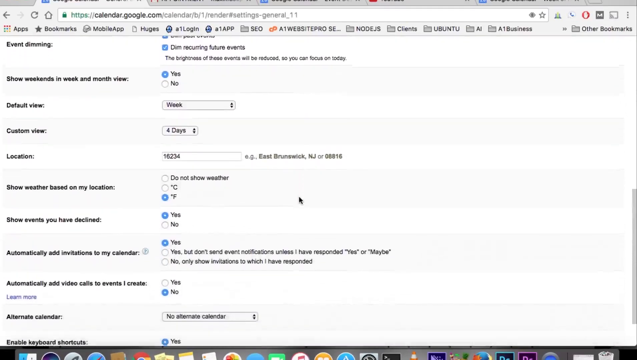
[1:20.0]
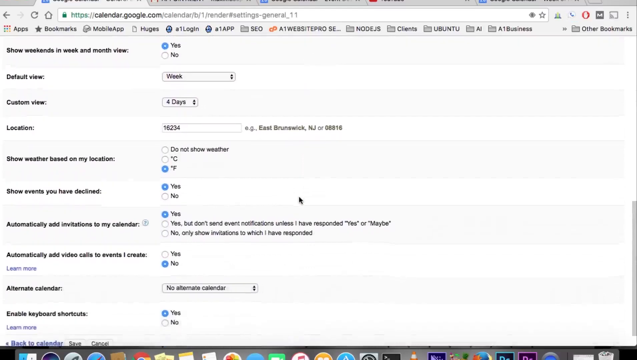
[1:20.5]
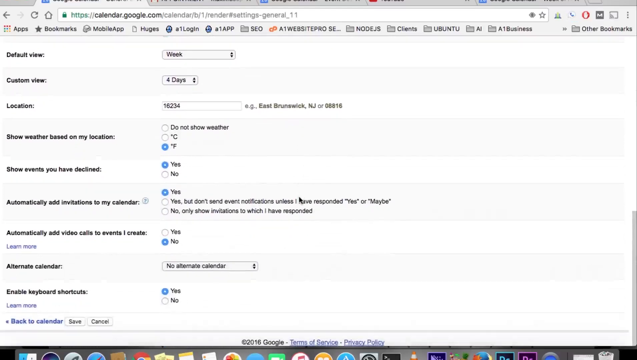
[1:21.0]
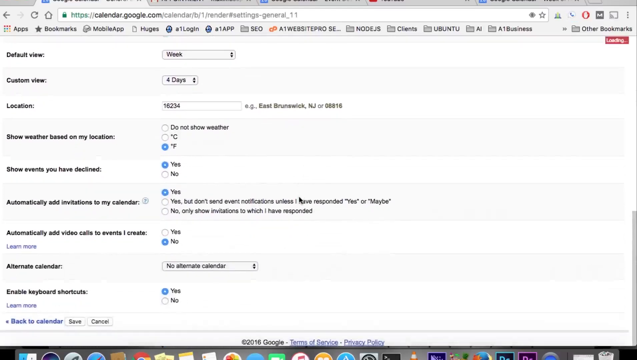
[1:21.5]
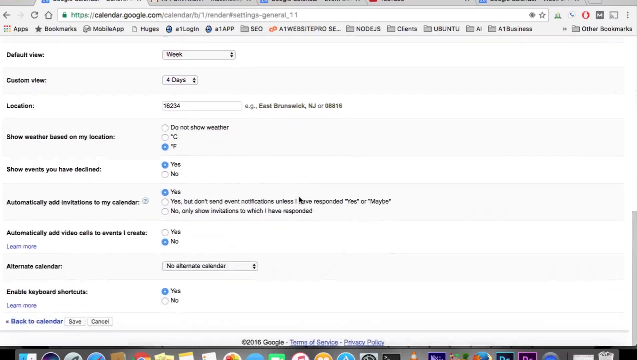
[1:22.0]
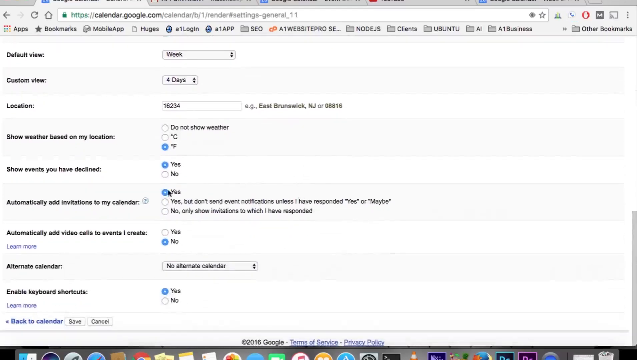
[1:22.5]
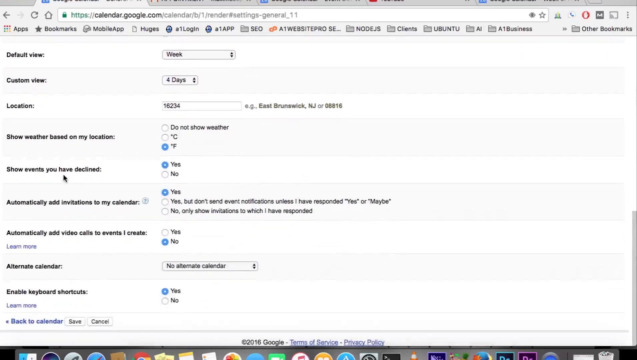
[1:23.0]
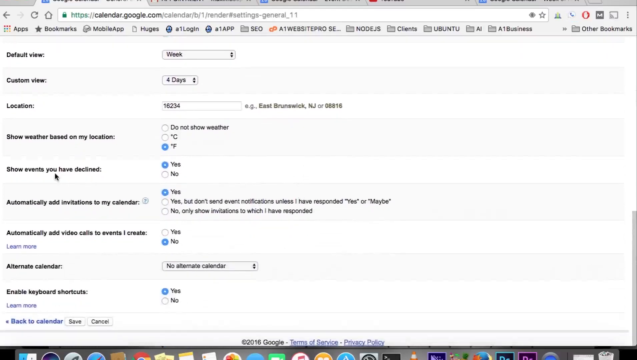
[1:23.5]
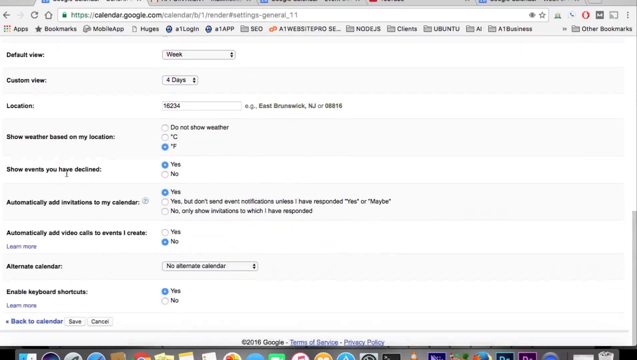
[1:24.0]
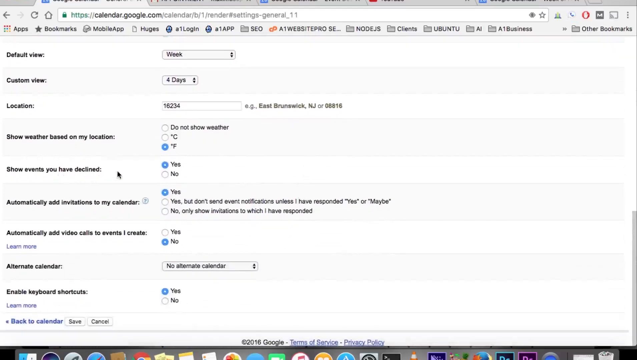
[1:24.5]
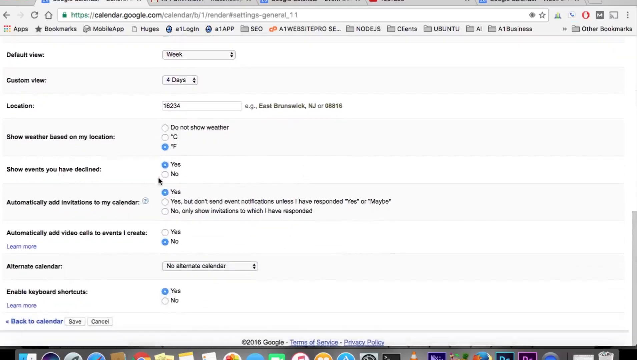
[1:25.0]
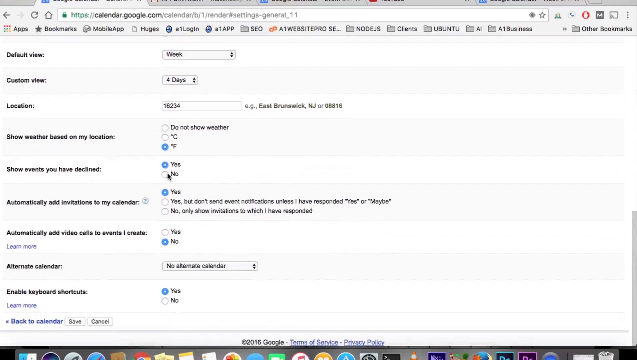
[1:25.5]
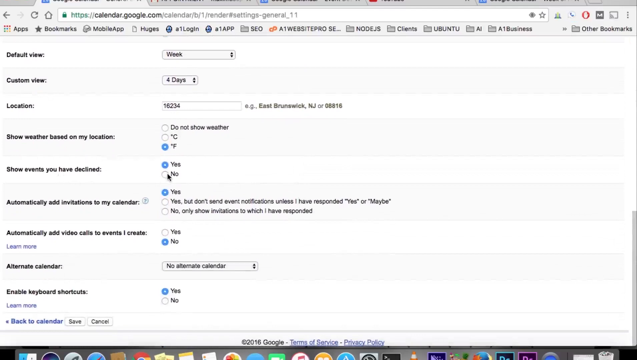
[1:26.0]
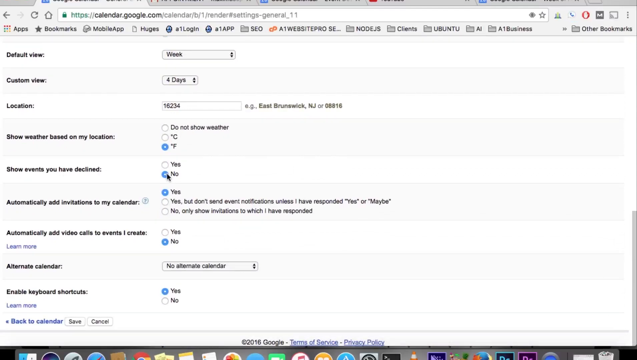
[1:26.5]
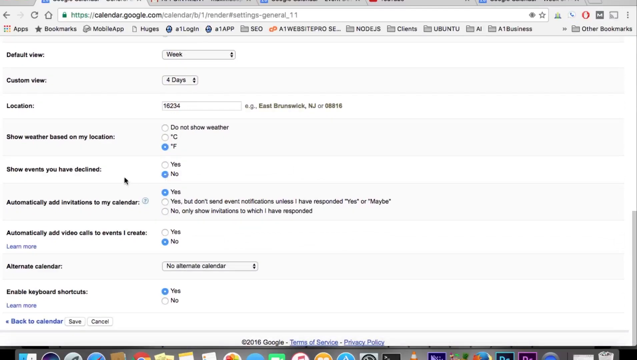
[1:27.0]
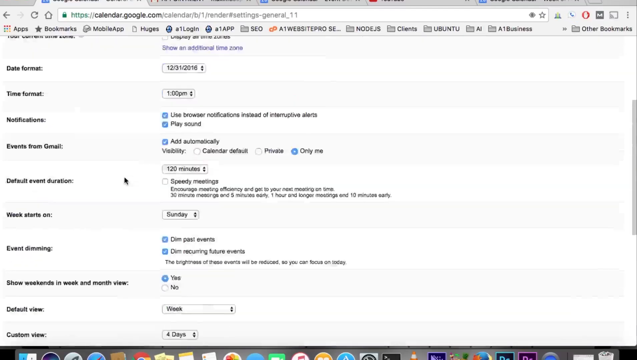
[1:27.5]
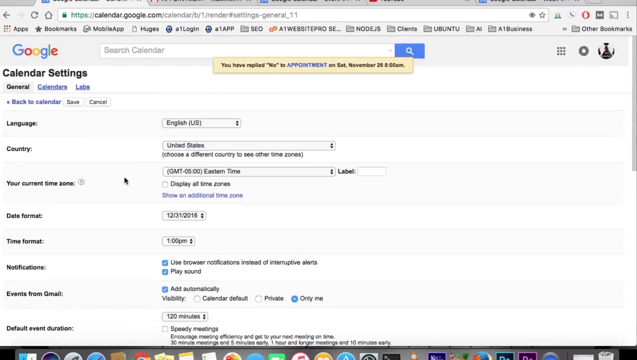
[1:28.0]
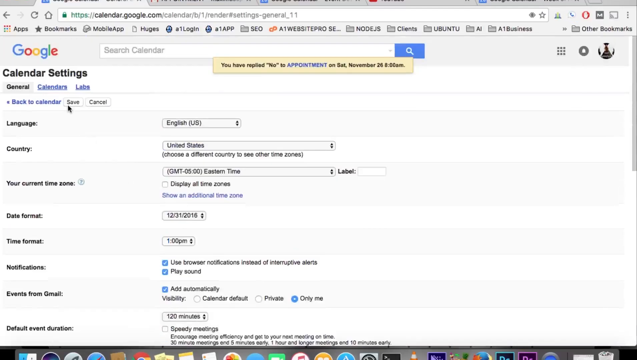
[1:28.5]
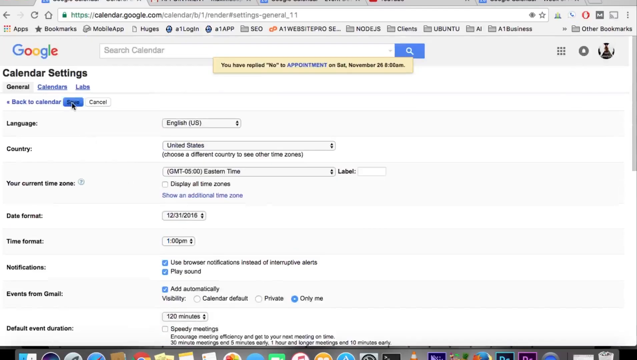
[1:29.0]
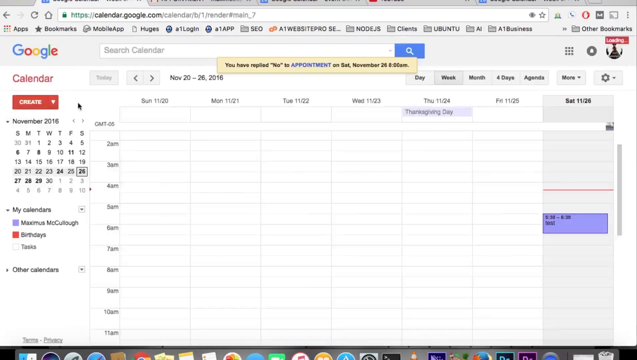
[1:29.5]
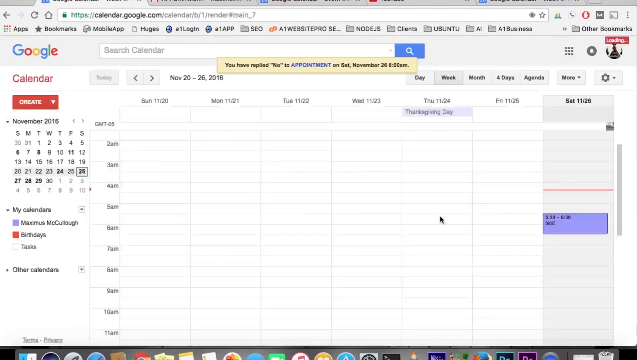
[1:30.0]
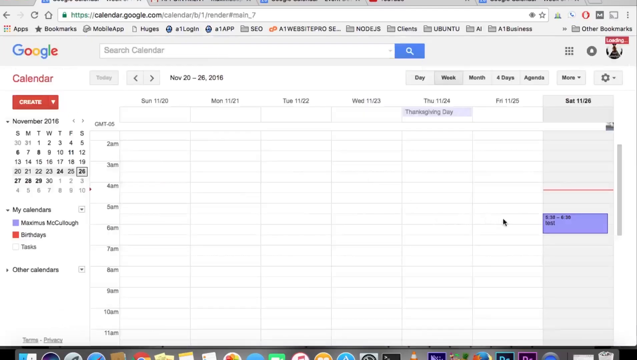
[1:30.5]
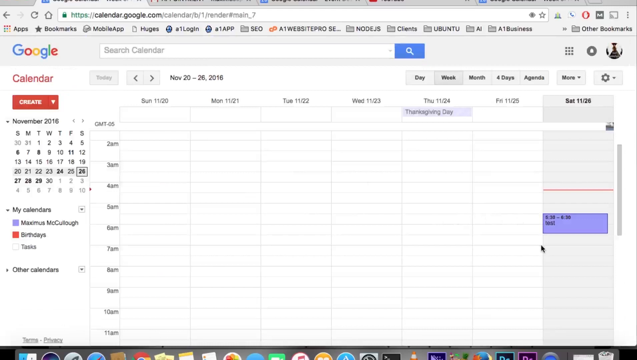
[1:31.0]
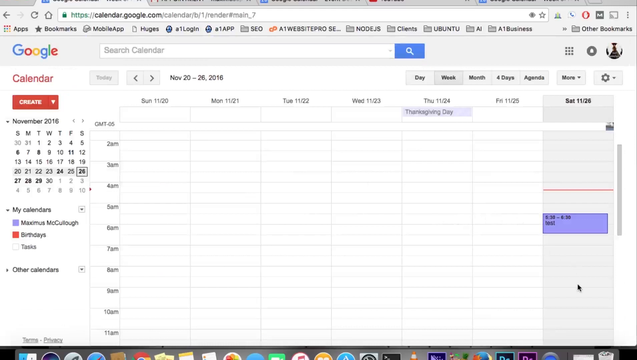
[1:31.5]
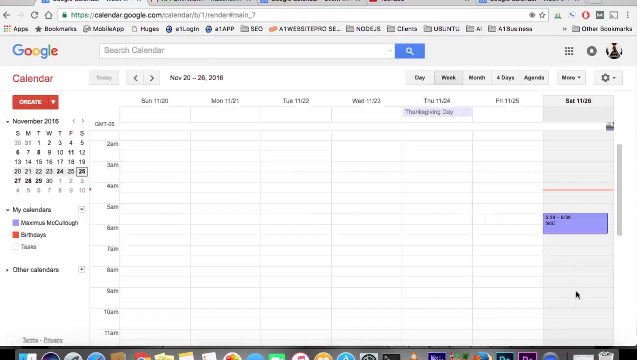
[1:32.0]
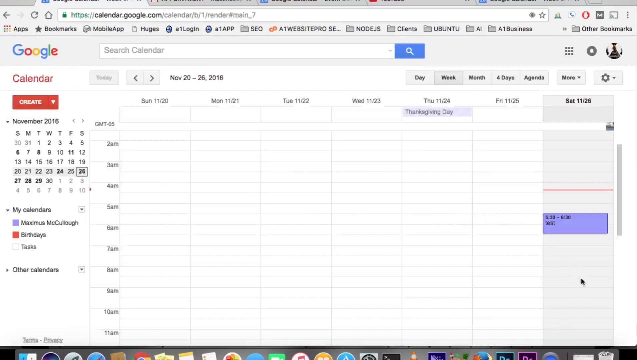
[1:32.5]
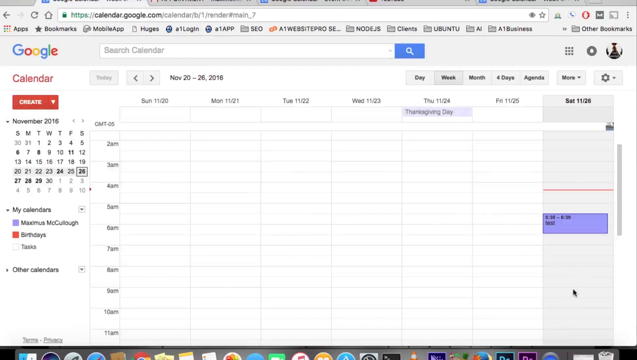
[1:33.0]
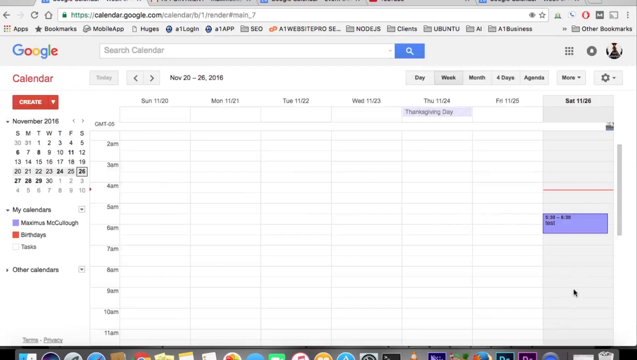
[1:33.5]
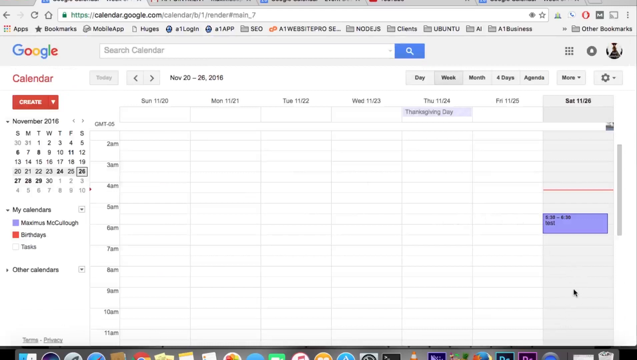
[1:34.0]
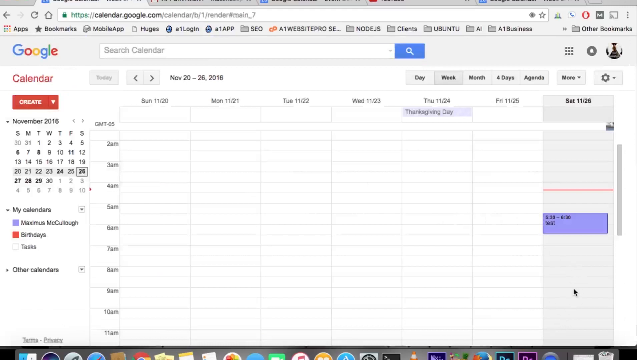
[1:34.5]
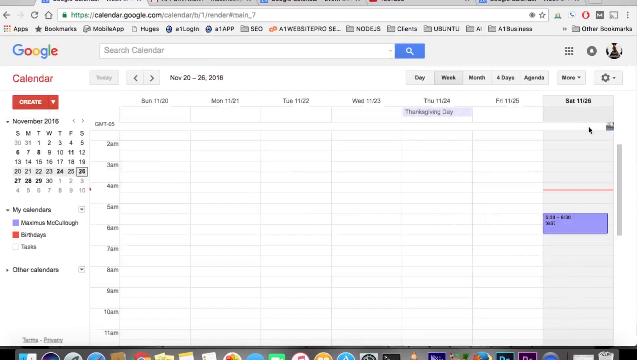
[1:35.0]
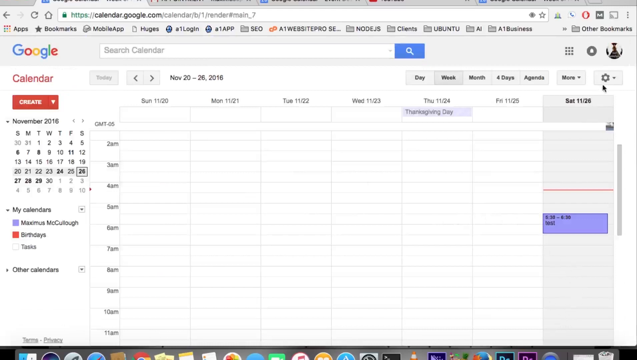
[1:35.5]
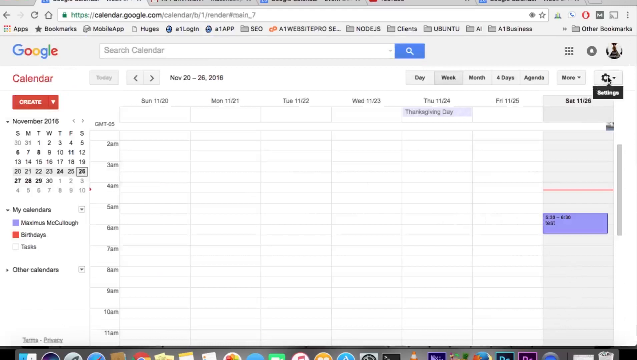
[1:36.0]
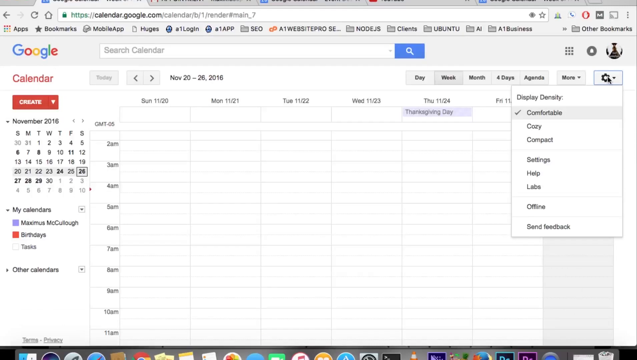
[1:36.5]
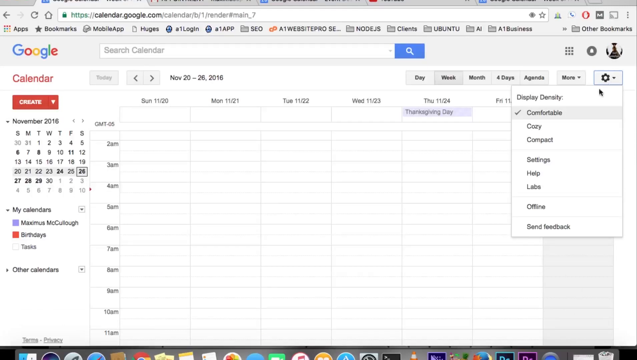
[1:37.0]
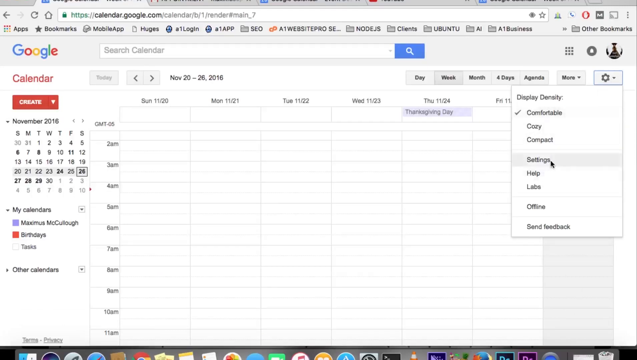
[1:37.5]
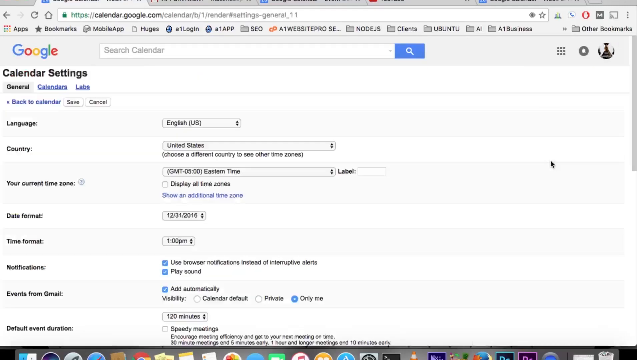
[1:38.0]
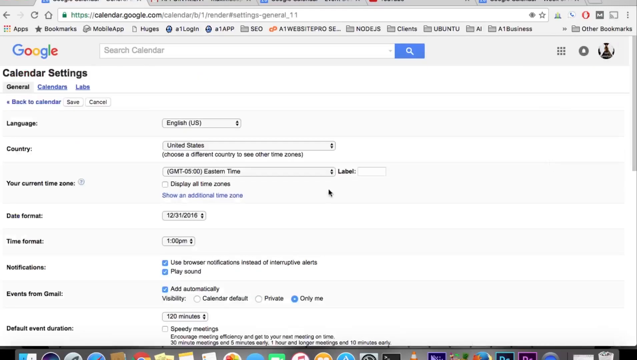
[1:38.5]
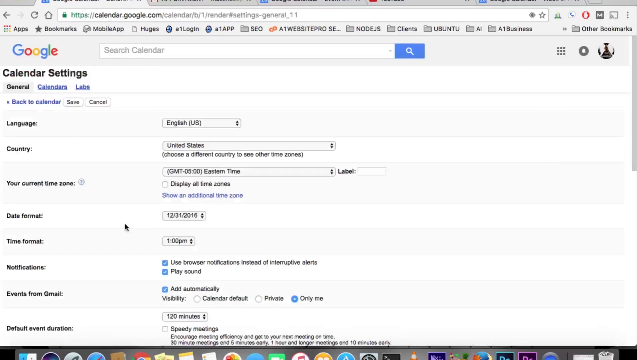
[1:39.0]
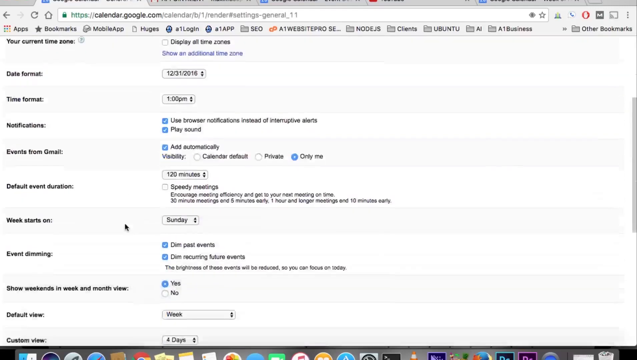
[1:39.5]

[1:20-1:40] The view is back on the Google Calendar page. The content below the Google Calendar tab moves up slightly, so the rows, which have headers at their left-hand side, shift up; some content at the top is no longer visible and content from below comes into view. The mouse settles on the row title "show events you have declined" in the left-hand column, then moves to the right of the title, where the options "yes" and "no" appear. "Yes" is active and "no" is not; the mouse stops on "no" and clicks it, so "yes" deactivates and "no" becomes active. The page then scrolls back up to its original position, the content revealed at the bottom disappears, and the original view of "calendar settings" with its rows of options underneath is shown.